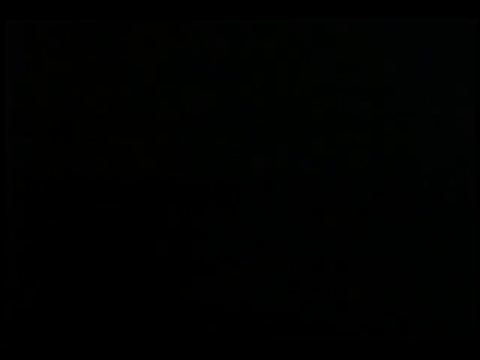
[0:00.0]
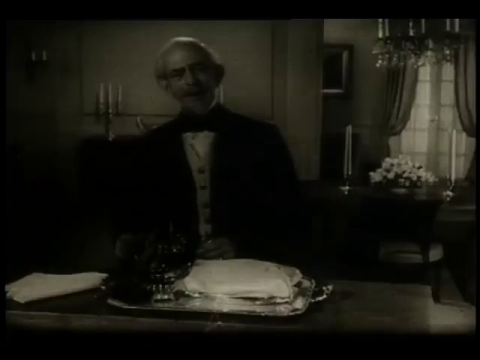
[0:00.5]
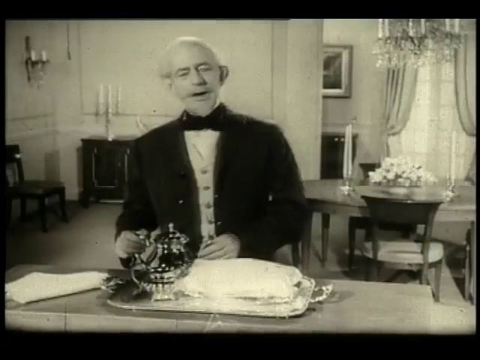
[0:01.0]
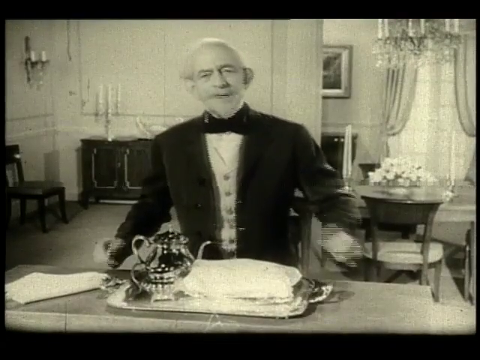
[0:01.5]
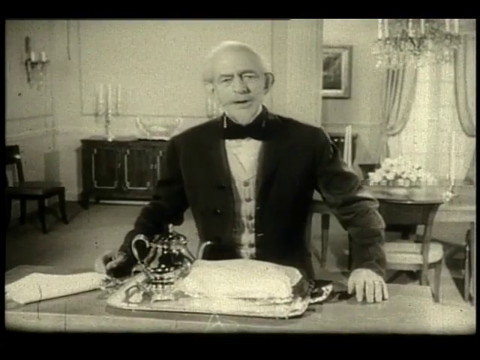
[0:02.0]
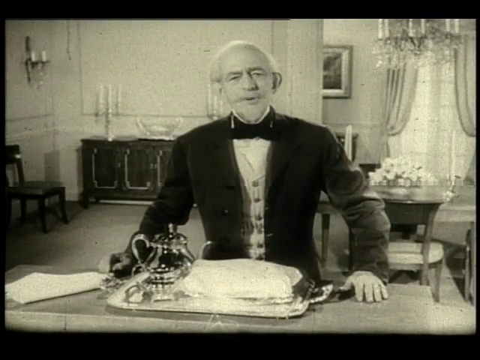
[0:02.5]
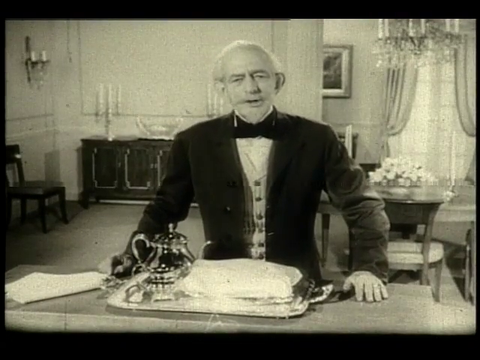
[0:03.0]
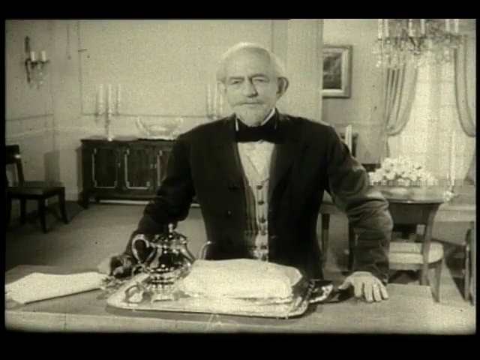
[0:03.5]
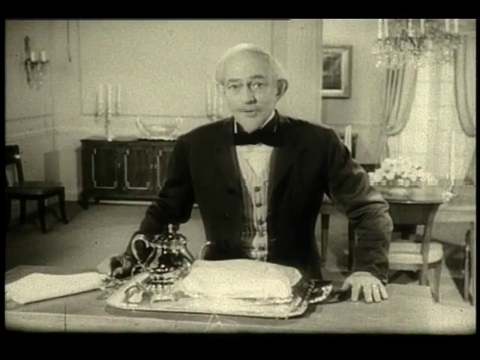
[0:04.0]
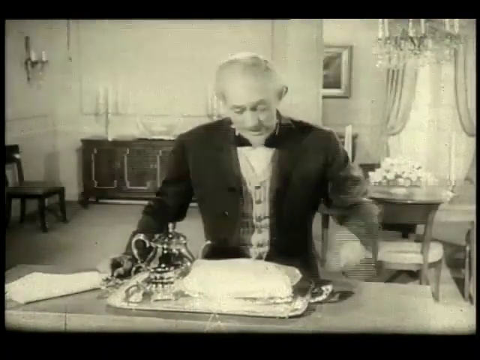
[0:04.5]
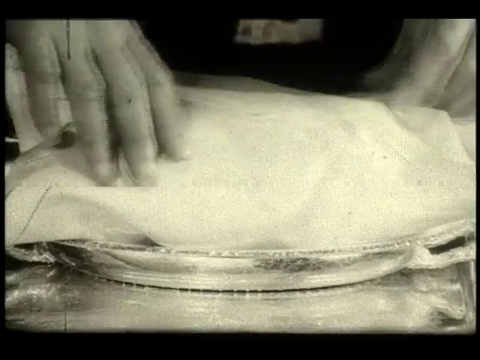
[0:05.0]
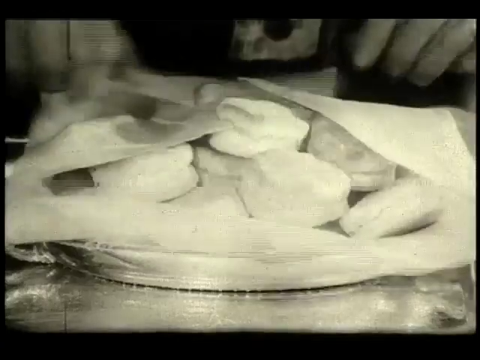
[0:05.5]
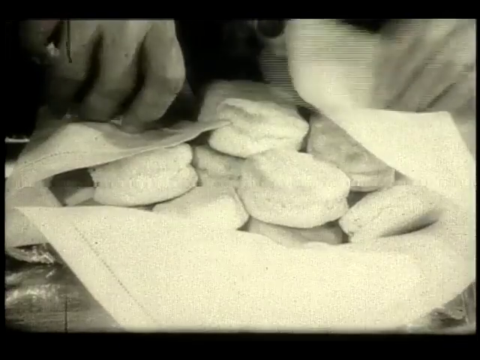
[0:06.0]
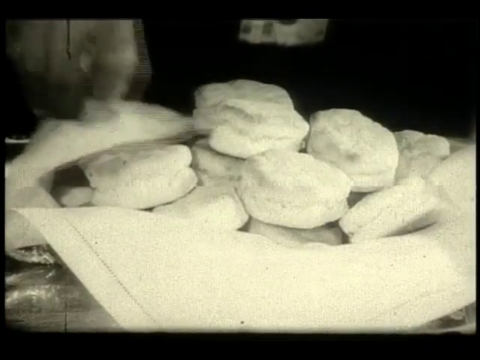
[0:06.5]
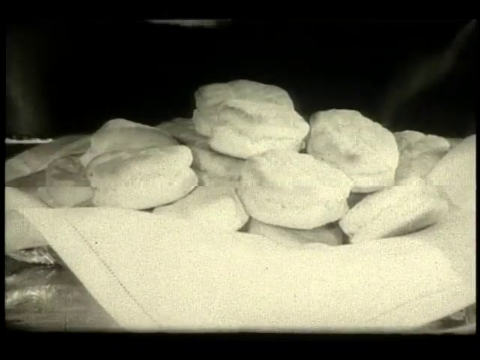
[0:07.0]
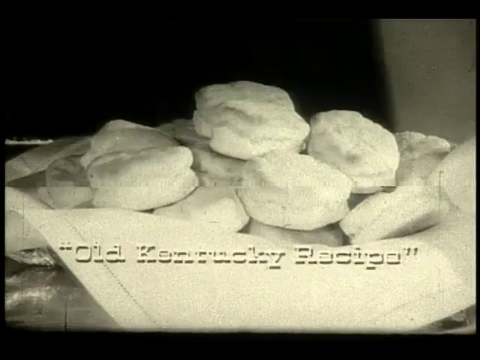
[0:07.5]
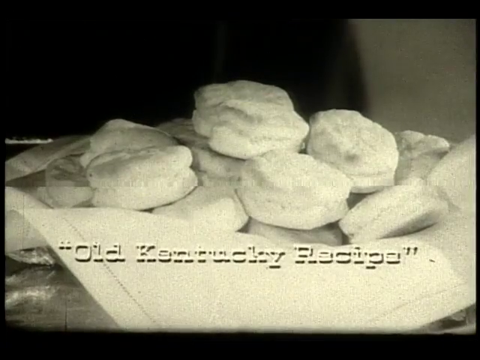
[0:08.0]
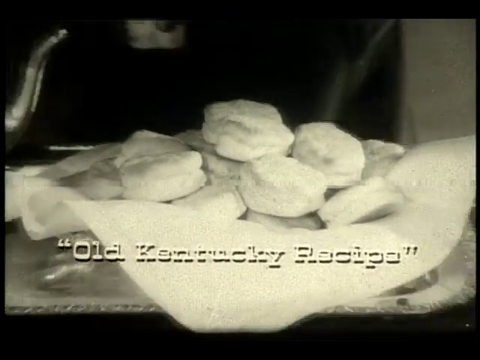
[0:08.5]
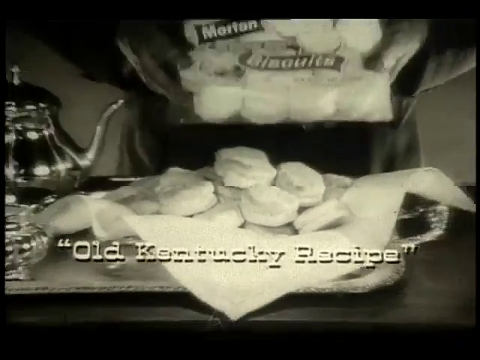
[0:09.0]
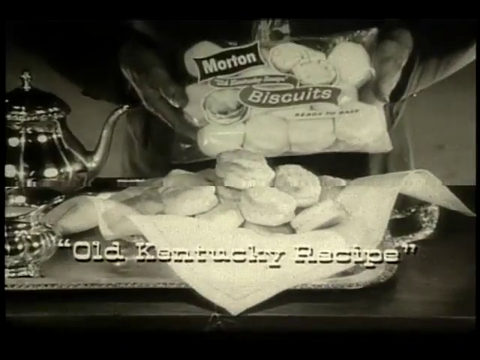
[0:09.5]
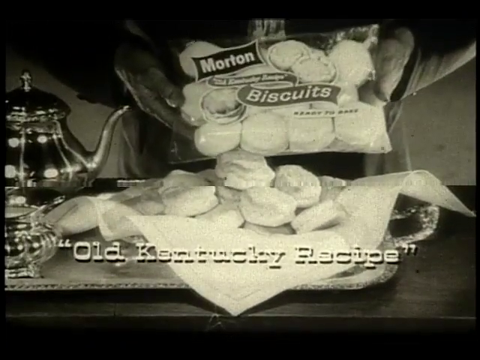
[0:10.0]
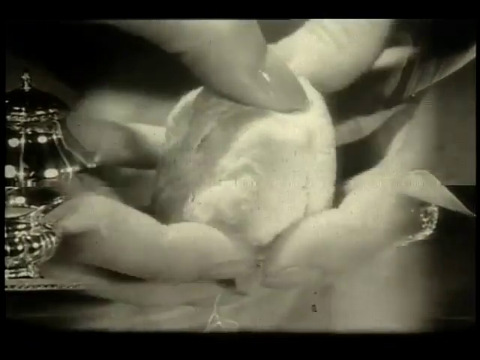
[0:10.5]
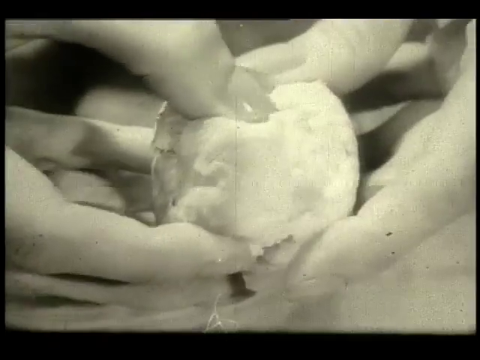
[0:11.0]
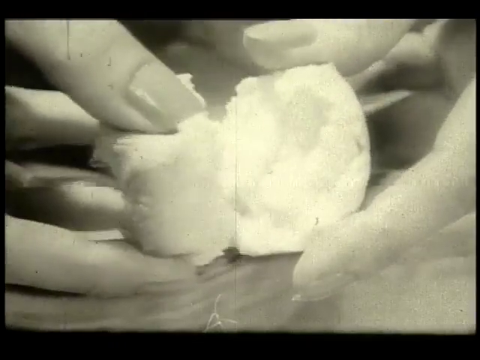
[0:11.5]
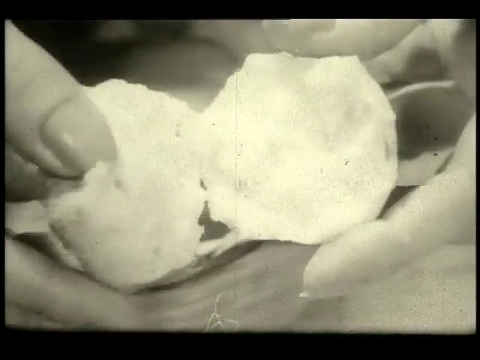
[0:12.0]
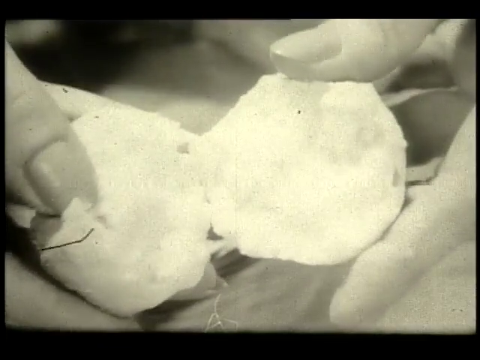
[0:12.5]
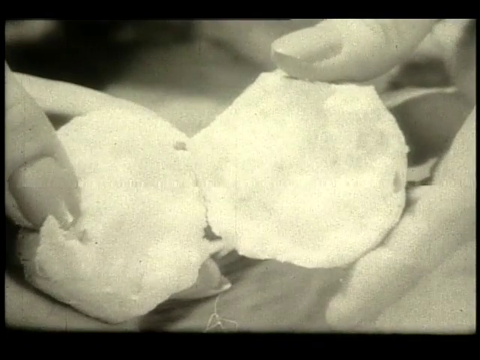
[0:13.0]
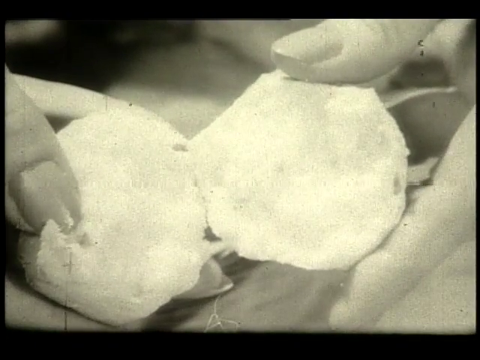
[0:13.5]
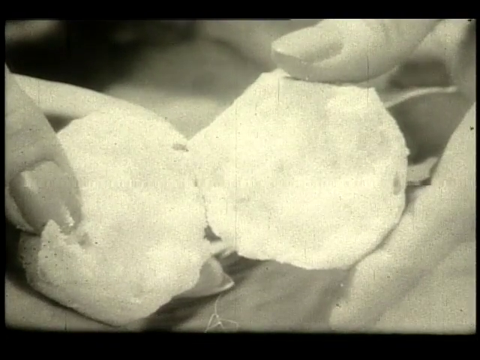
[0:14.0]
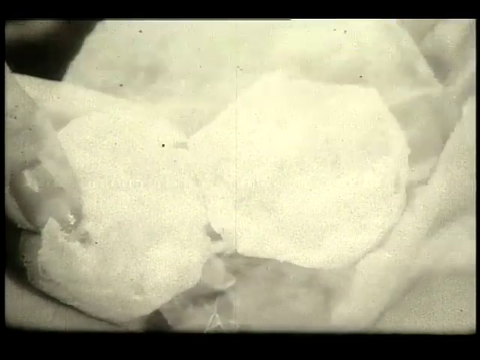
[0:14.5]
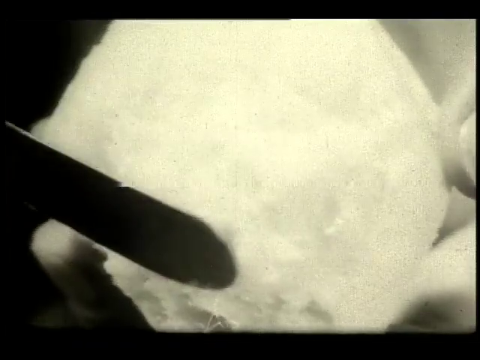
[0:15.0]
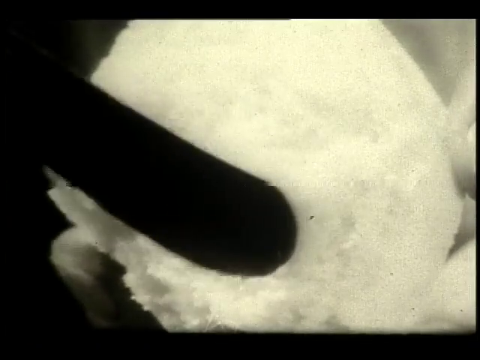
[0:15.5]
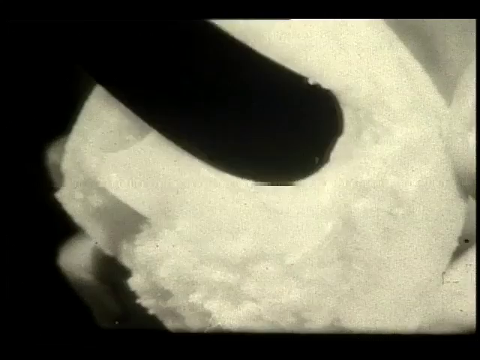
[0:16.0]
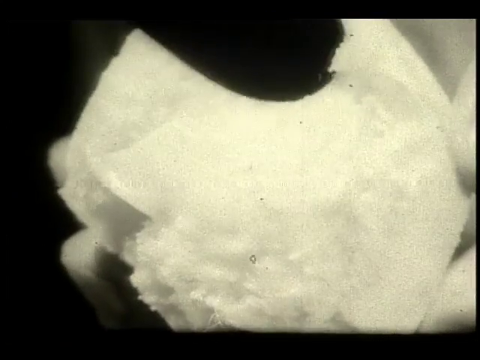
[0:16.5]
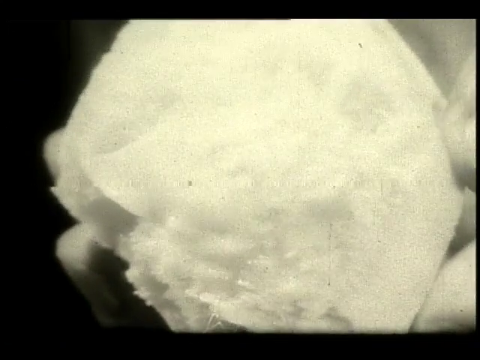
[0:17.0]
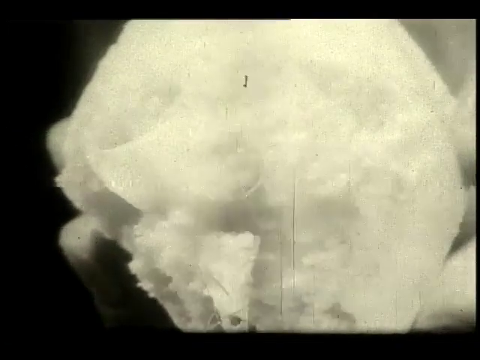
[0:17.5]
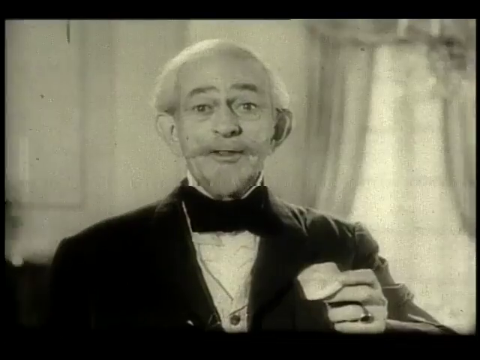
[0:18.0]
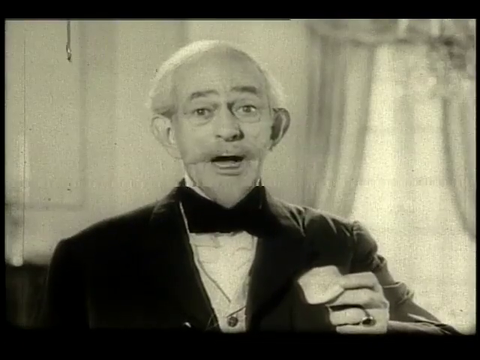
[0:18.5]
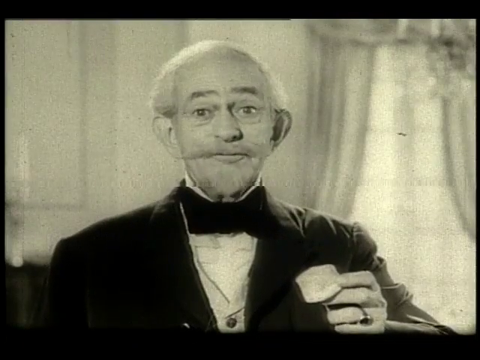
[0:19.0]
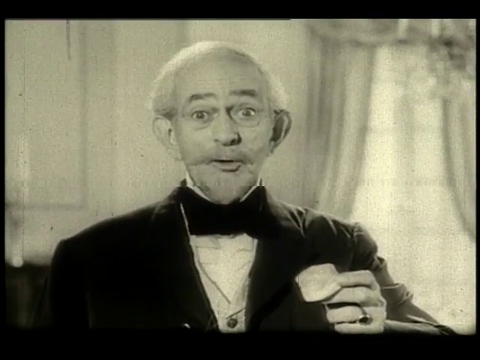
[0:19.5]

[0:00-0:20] An old-style, almost retro video shows an old man with kind of short, balding gray hair, probably between the ages of 60 and 70. He wears kind of a black tuxedo with kind of a white undershirt and looks at some food, which turns out to be biscuits; it is an advertisement for biscuits. Biscuits are displayed underneath kind of a cloth, and then the biscuits are split in half and buttered. The very gray-haired man is shown holding a biscuit in his black suit, which is almost like a tuxedo, with a black bow tie. He has a ring on his middle finger and seems to be holding a small biscuit and describing something about it.